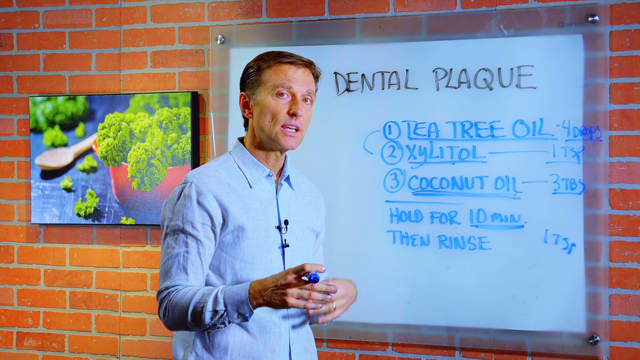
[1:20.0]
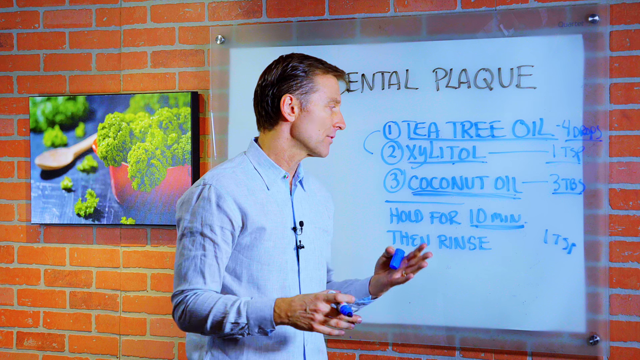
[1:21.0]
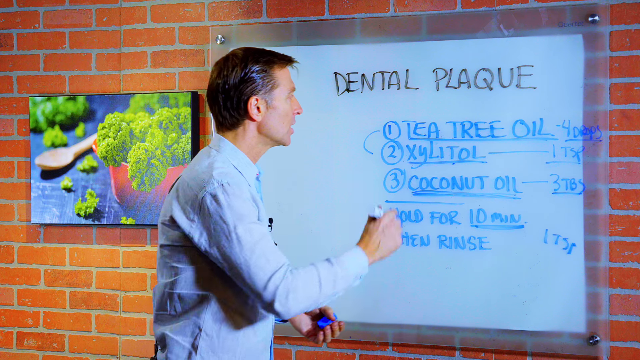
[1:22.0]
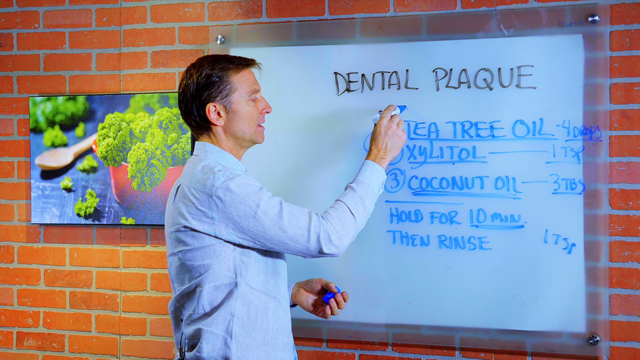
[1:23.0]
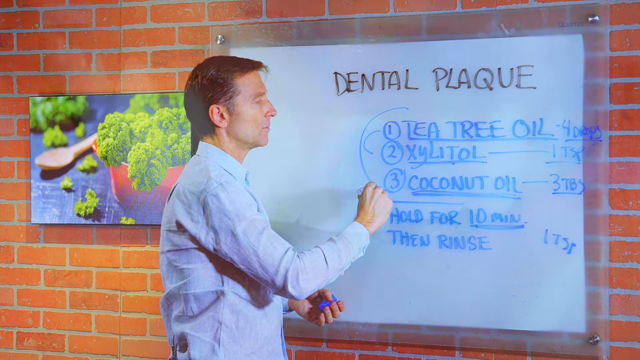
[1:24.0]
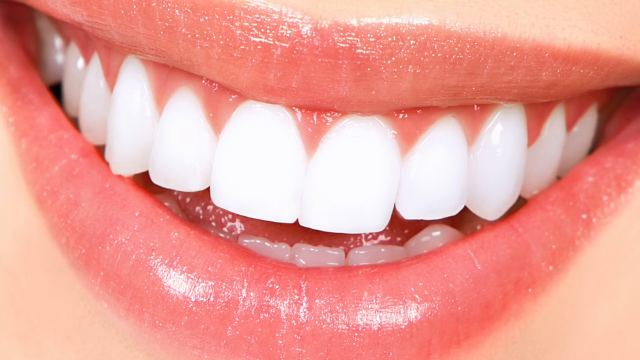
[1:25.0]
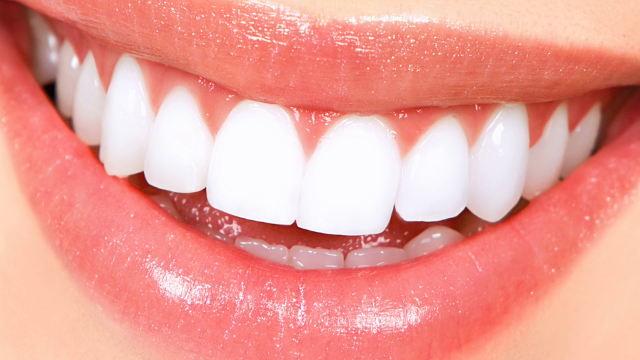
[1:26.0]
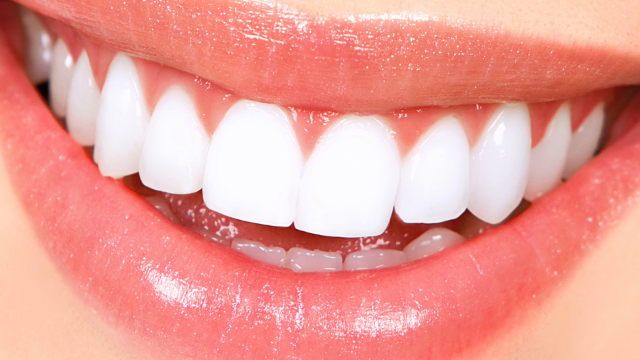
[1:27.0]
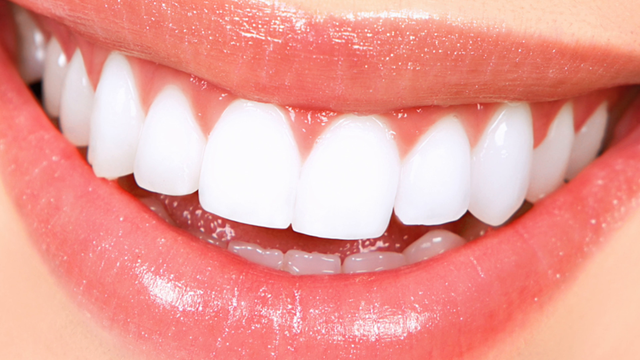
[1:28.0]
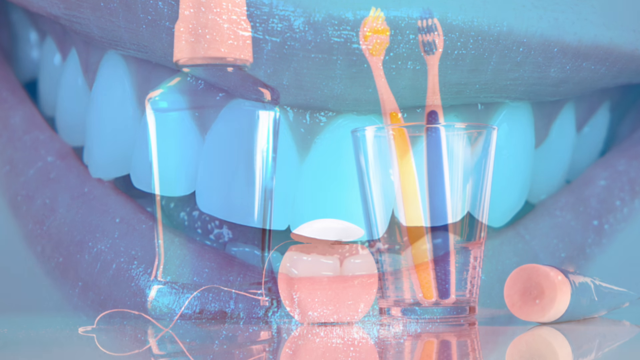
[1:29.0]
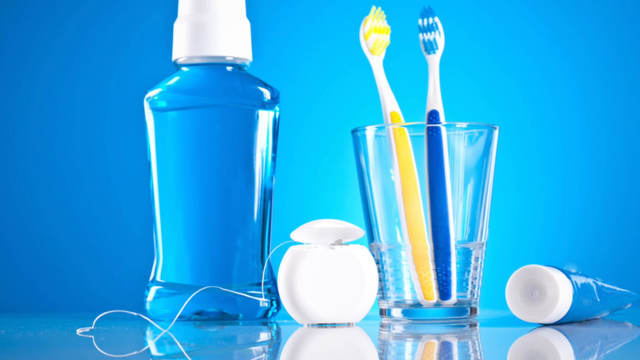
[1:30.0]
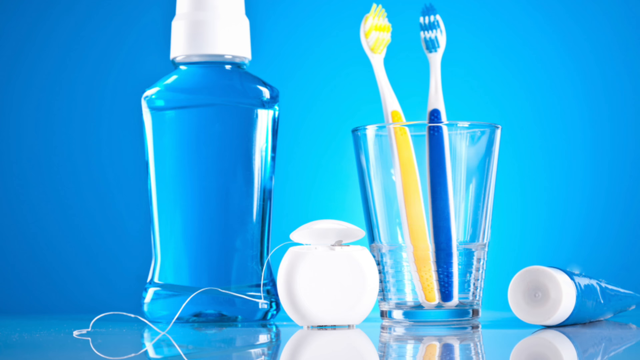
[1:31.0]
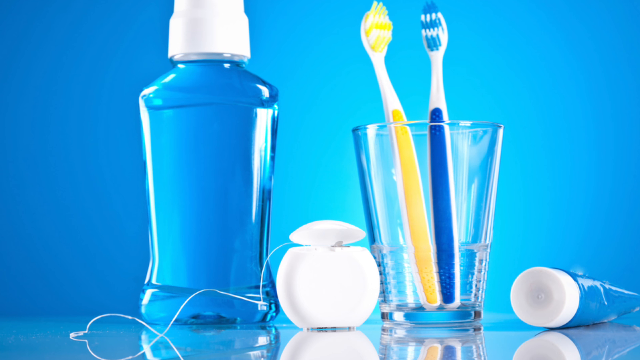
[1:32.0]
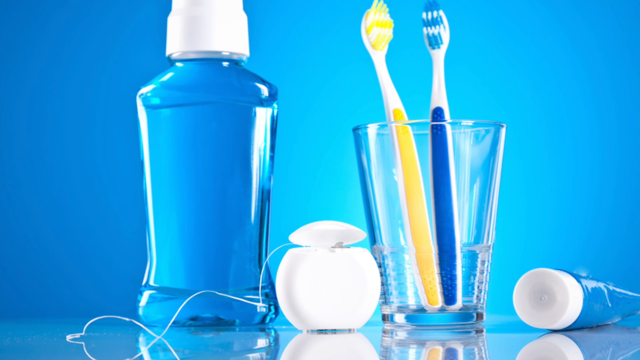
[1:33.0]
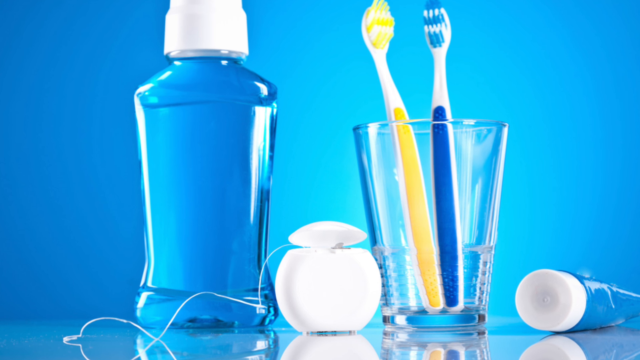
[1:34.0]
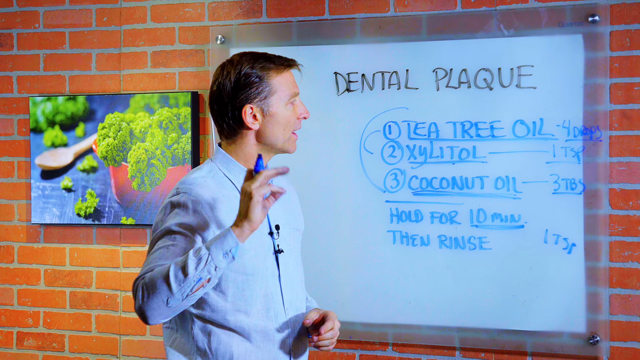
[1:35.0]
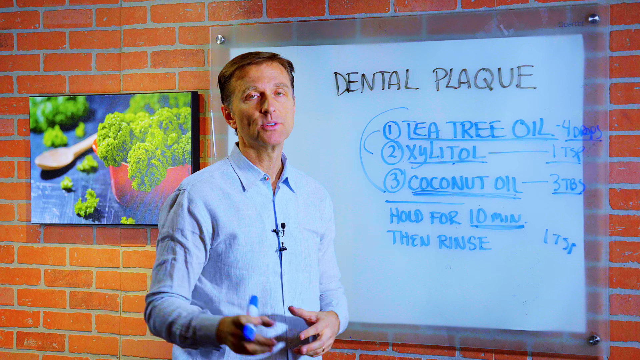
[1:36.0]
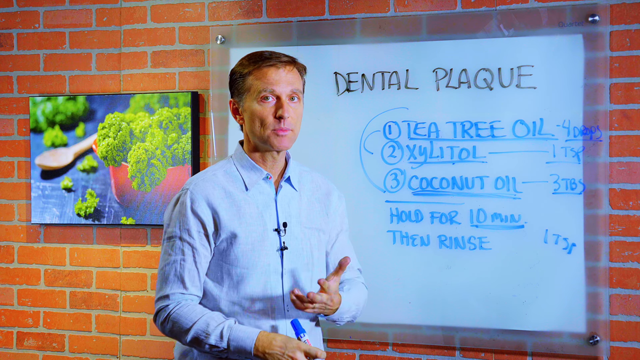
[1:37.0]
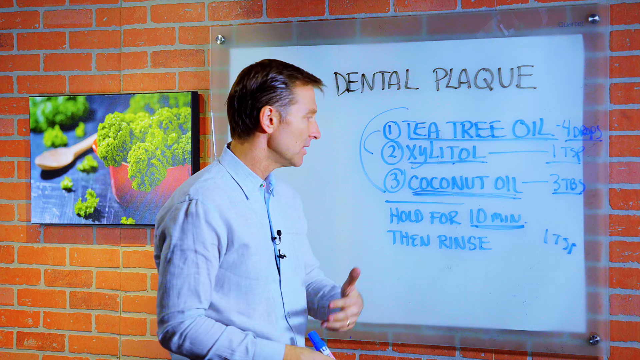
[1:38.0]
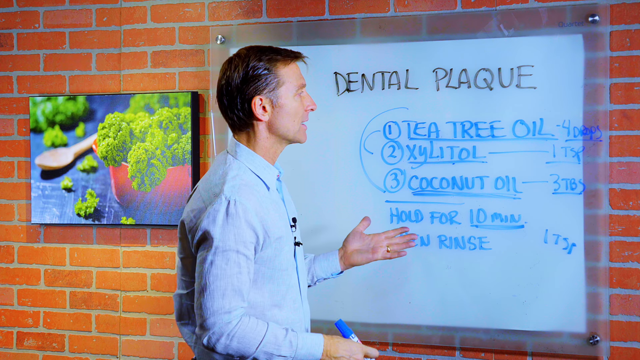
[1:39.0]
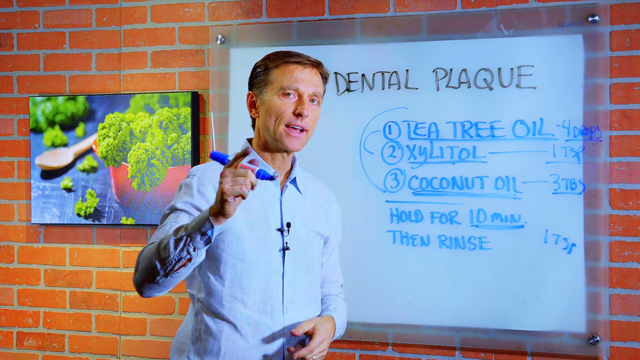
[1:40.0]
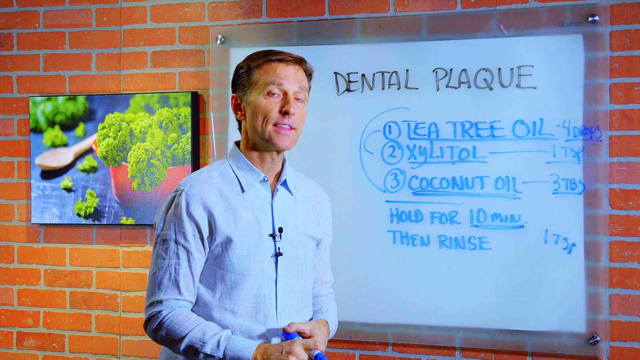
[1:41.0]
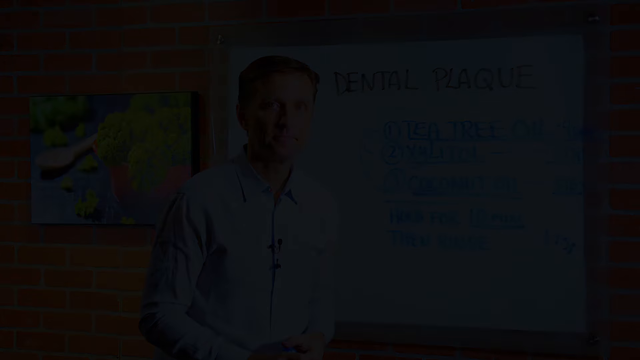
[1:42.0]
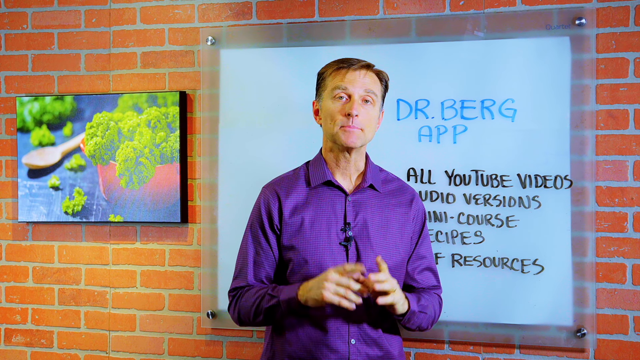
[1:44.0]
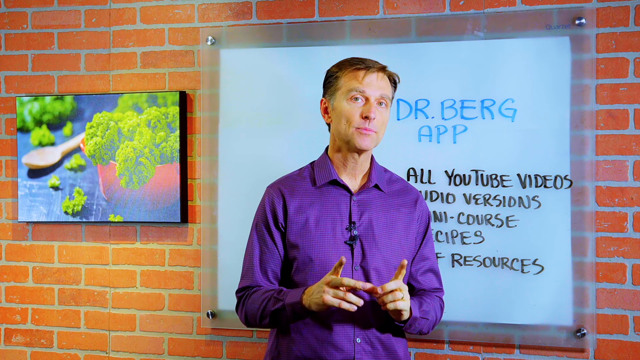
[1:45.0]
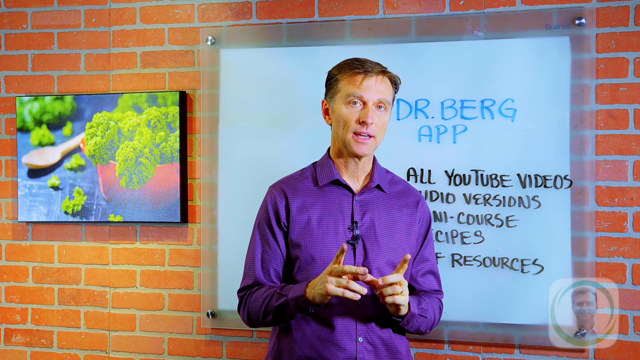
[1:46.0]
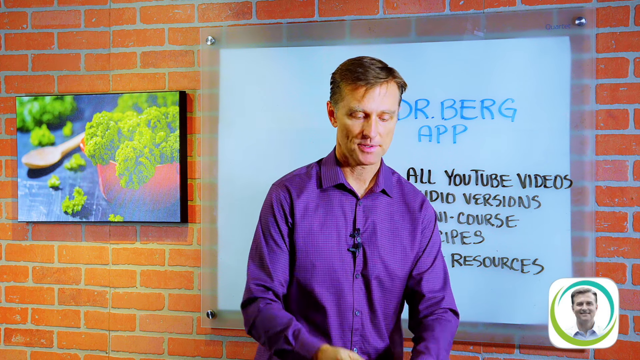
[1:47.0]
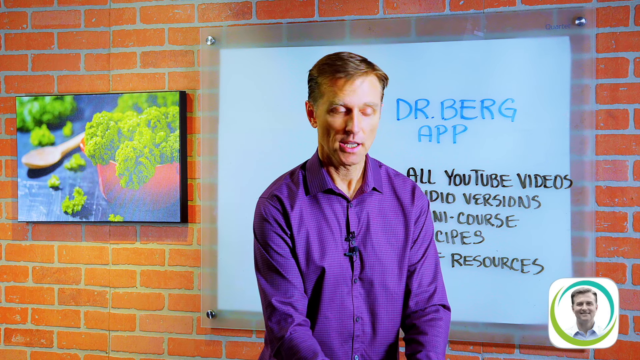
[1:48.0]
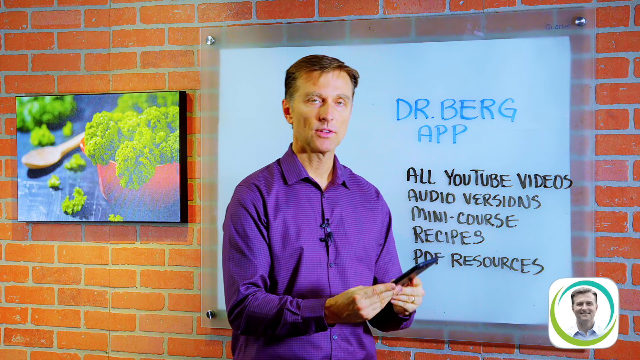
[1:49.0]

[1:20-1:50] The man speaks in front of the clear wall board with the written recommendations for preventing dental plaque. With his right hand he draws a line above the number one line, tea tree oil, and connects it to the third line, coconut oil. The video transitions to a tight close-up of a woman's smiling mouth showing bright white, perfectly aligned teeth. Next comes an image of a bottle of blue mouthwash with a white cap; to its right is a glass holding two toothbrushes, one yellow and one blue, with white necks, standing with the brush heads at the top. To the right of the glass lies an unidentified blue tube with a white cap, and between the mouthwash and the glass is a sort of egg-shaped object with its top slightly open, possibly dental floss, against a blue background. The video returns to the man talking in front of the wall board and gesturing with his hands. It then fades to black and returns to the same man, now wearing a purple button-down shirt. The wall board now reads "Dr. Berg app" with five lines: "all YouTube videos", "audio version", "mini course", "recipes", and a fifth line where only the second word, "resources", is fully visible; the man is standing in front of the first word, of which only the last letter, "F", can be seen. The setting is the same, with the wall board screwed into the brick wall.